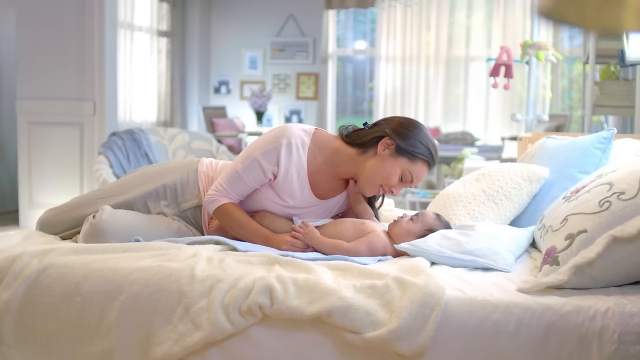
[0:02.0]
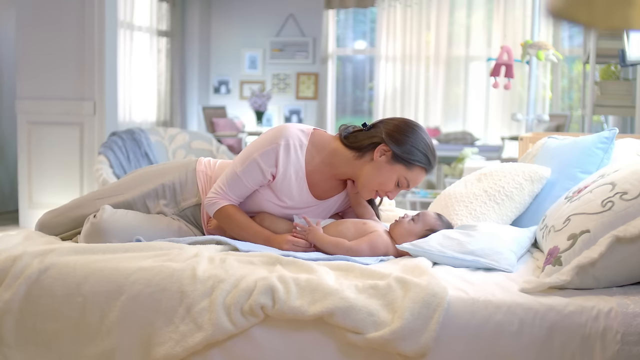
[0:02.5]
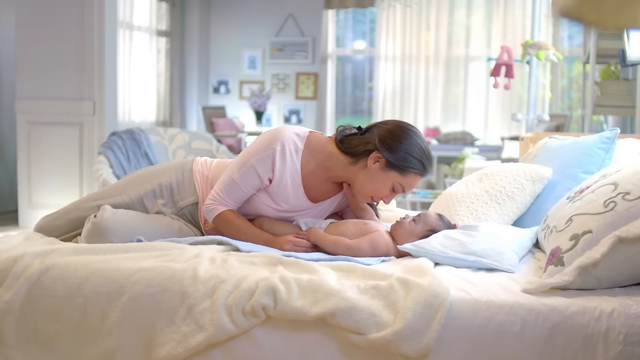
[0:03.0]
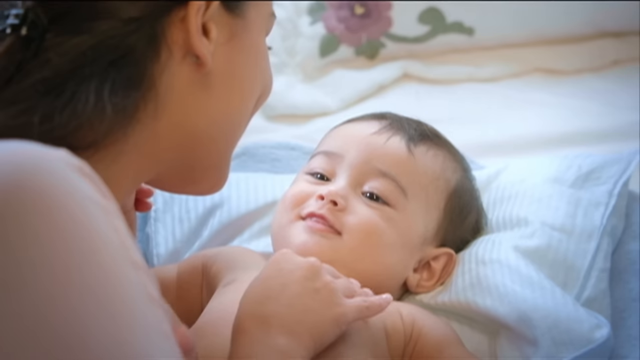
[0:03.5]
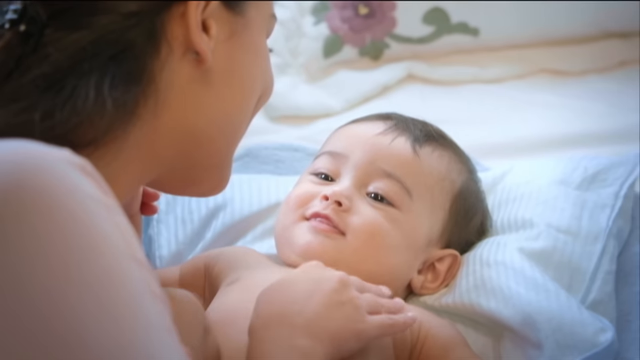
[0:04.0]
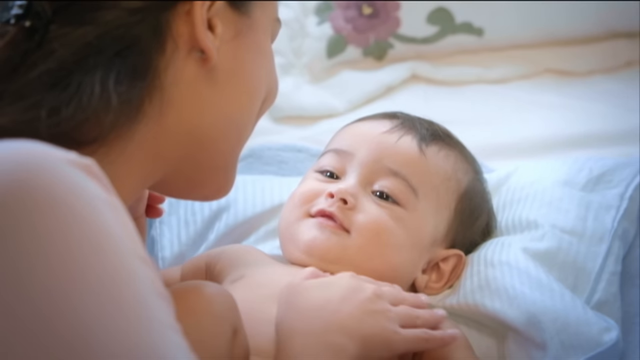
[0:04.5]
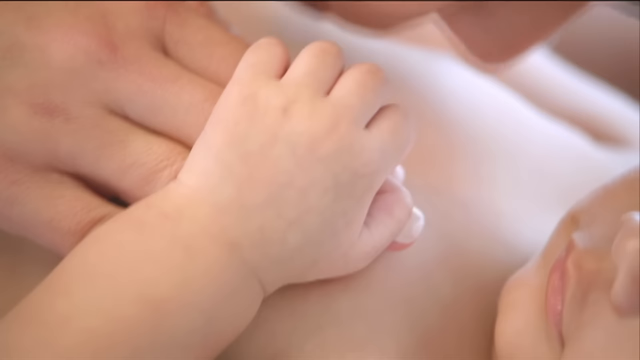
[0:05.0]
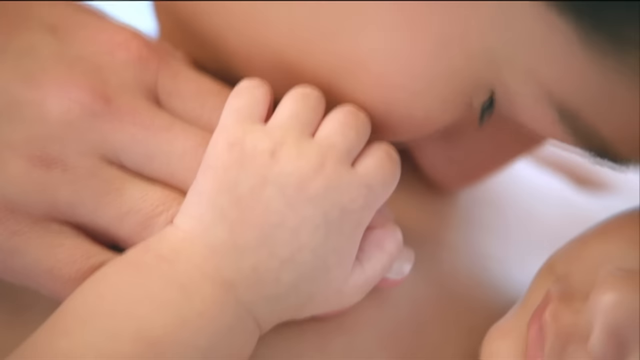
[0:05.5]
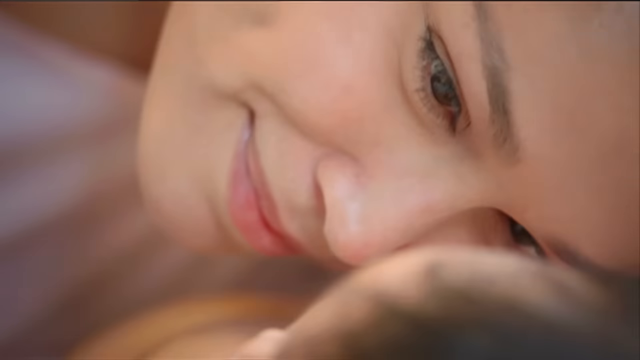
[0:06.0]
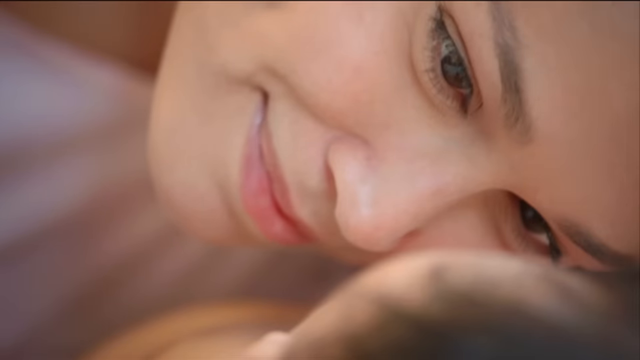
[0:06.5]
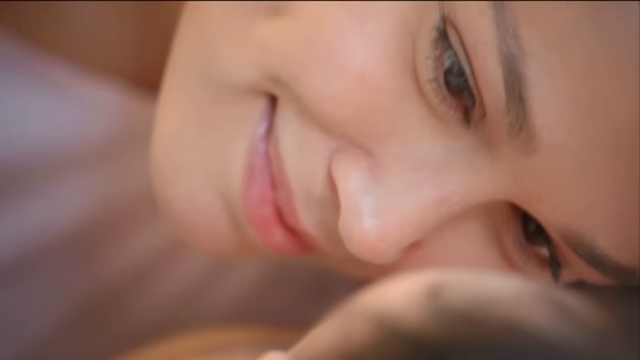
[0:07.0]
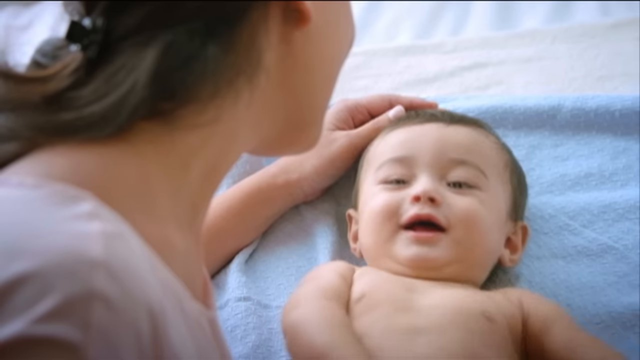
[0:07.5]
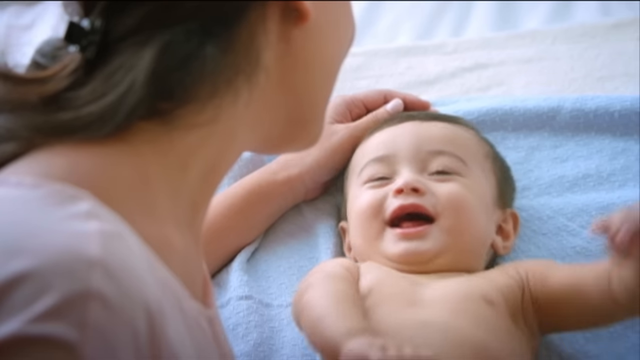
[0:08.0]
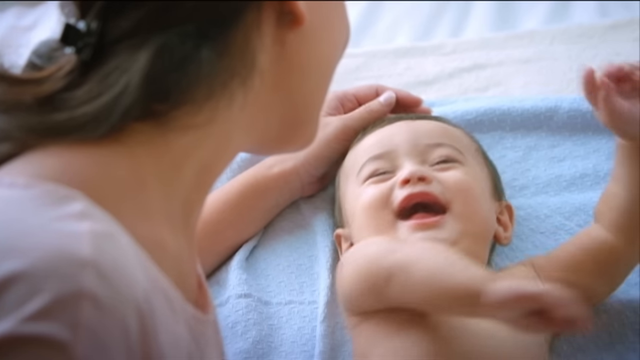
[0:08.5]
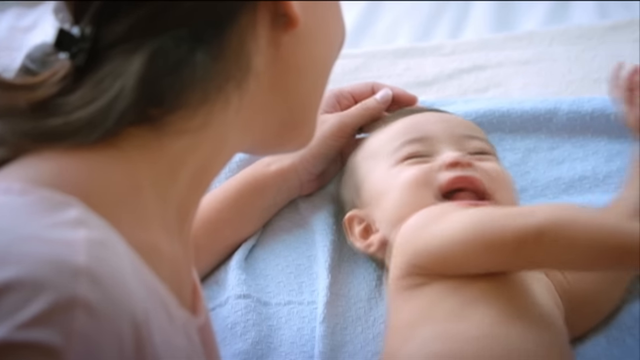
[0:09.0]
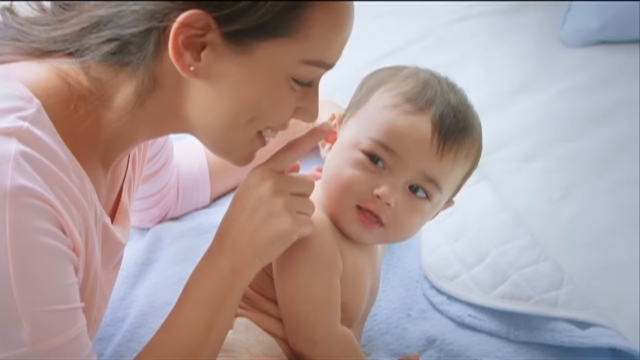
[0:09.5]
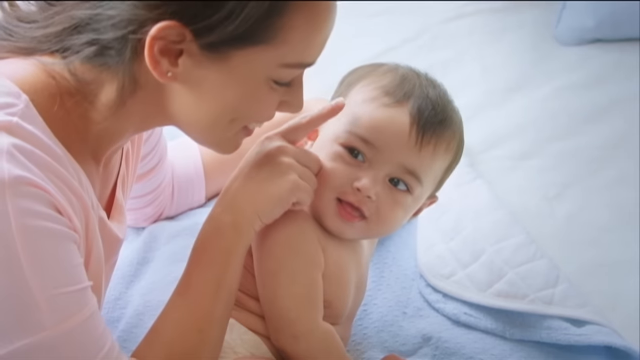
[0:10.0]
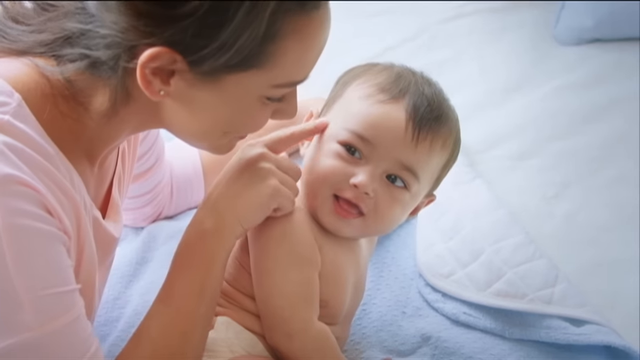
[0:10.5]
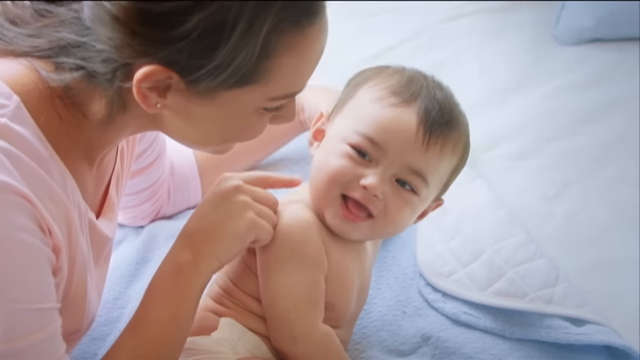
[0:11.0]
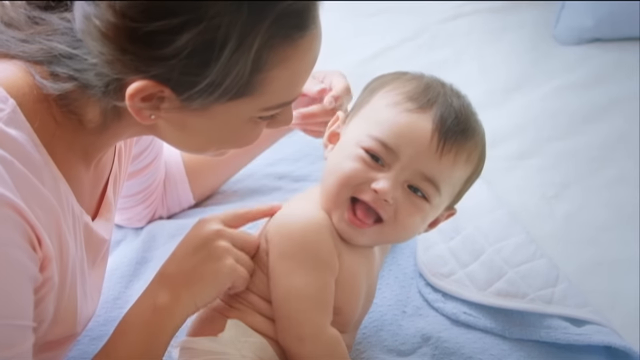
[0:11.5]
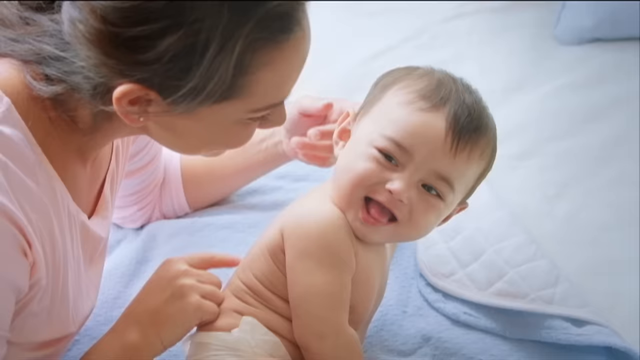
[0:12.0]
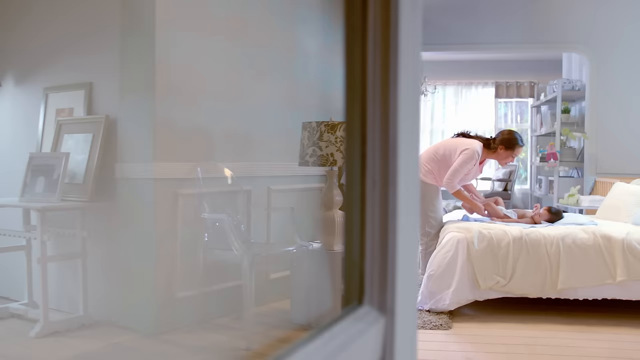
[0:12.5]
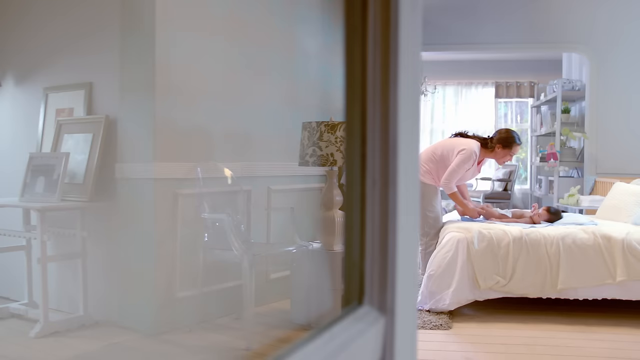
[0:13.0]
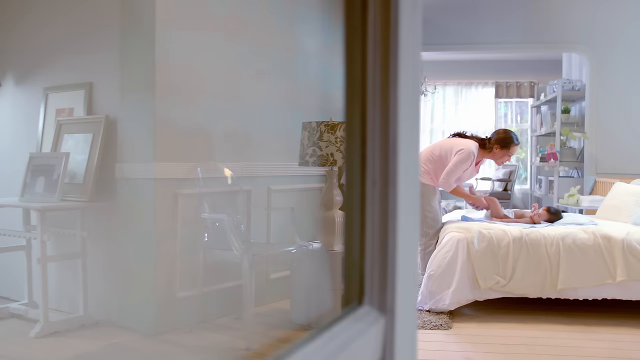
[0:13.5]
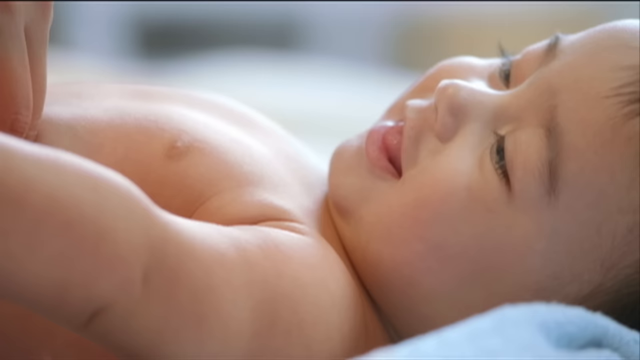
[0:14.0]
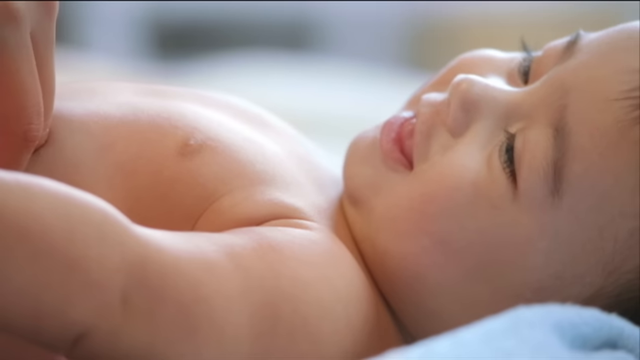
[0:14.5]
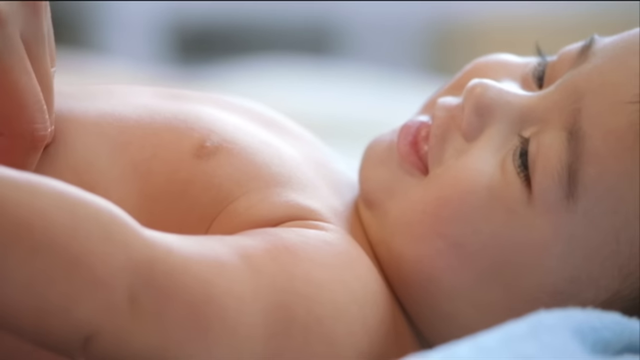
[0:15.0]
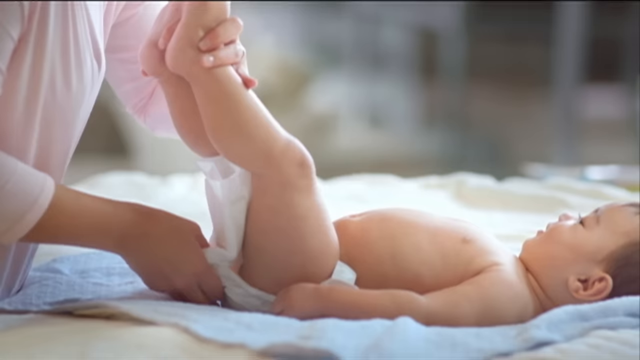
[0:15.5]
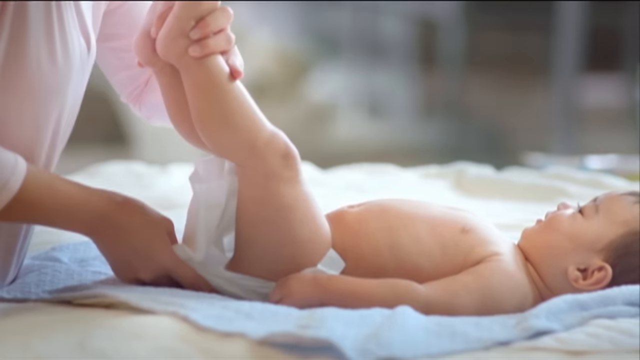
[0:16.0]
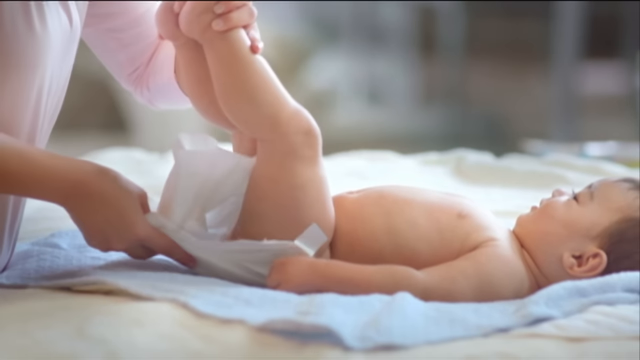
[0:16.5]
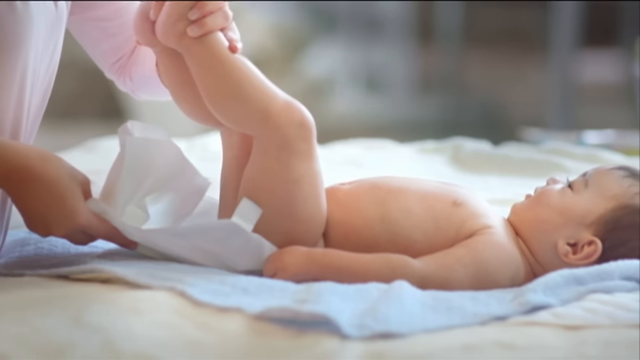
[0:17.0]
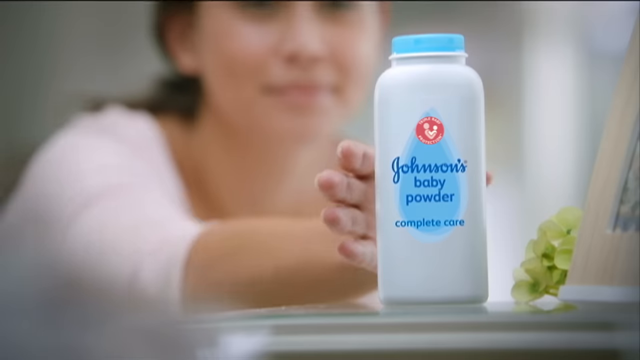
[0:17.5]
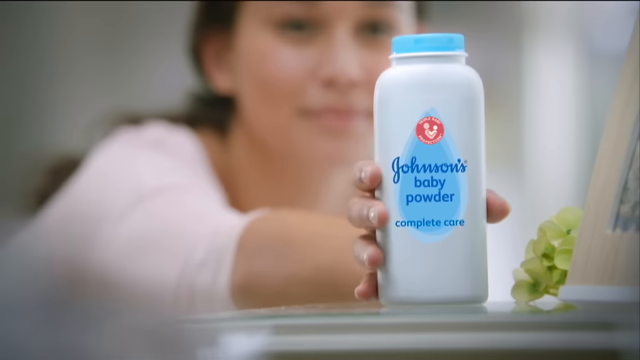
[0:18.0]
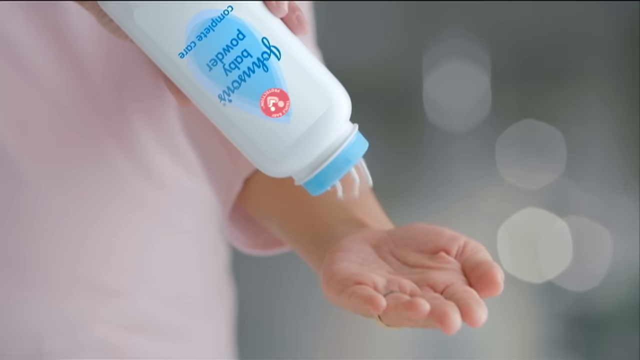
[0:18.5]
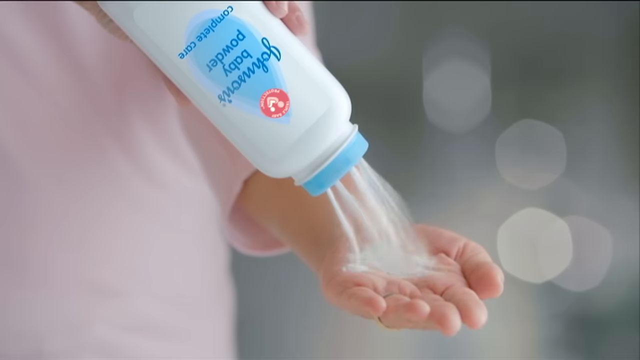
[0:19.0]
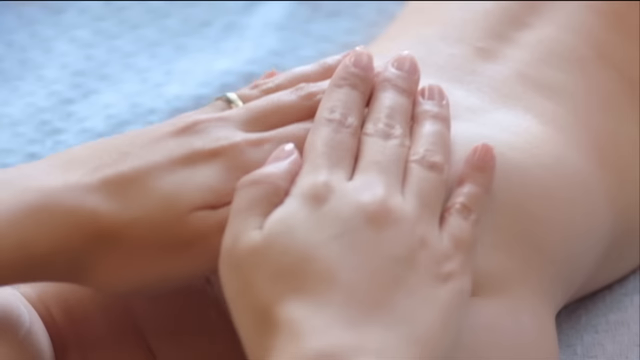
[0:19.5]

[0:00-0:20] A mother lies behind a baby boy and kisses him on the chest, and the baby laughs happily at her. The mother changes the baby's diaper while he lies on the bed; she pours a lot of Johnson & Johnson baby powder and rubs it on the little boy's bum. The baby laughs and smiles at his mother as she plays with him, and he appears comfortable as his diaper is changed.